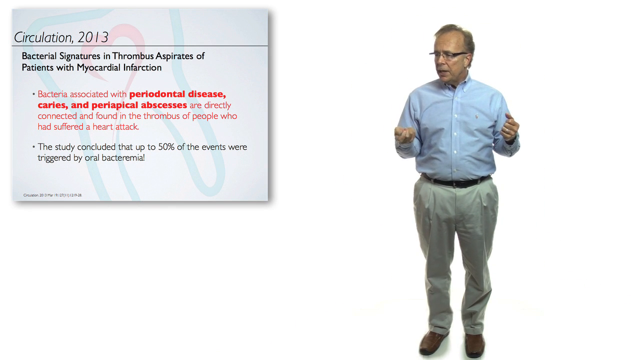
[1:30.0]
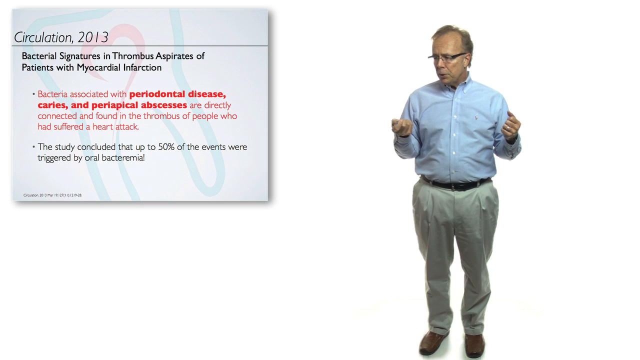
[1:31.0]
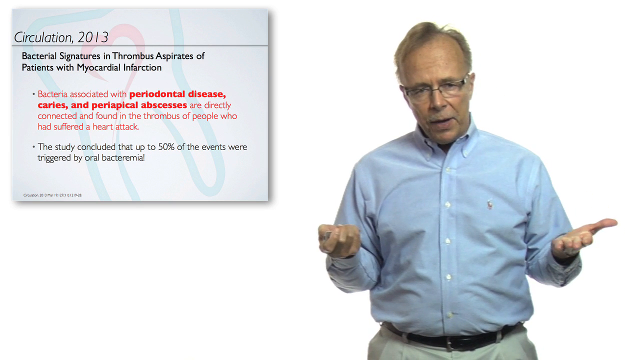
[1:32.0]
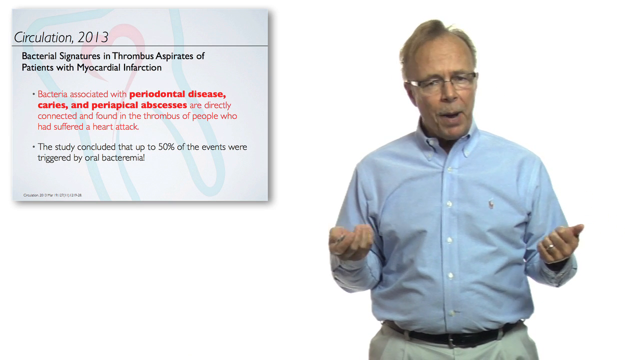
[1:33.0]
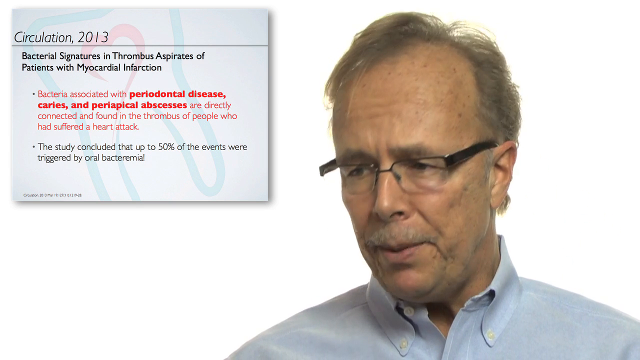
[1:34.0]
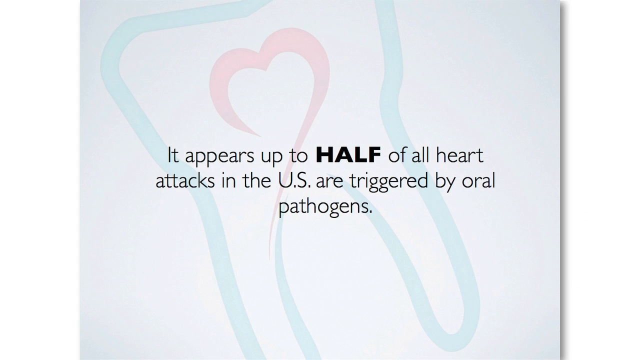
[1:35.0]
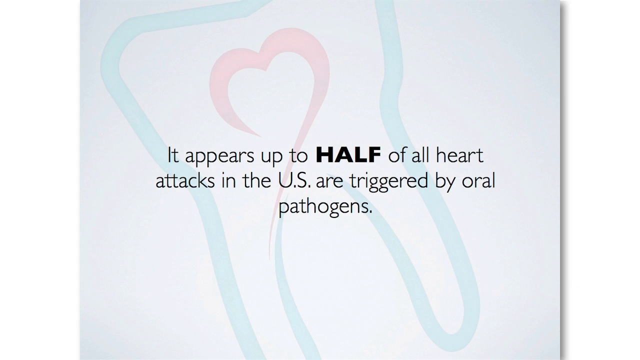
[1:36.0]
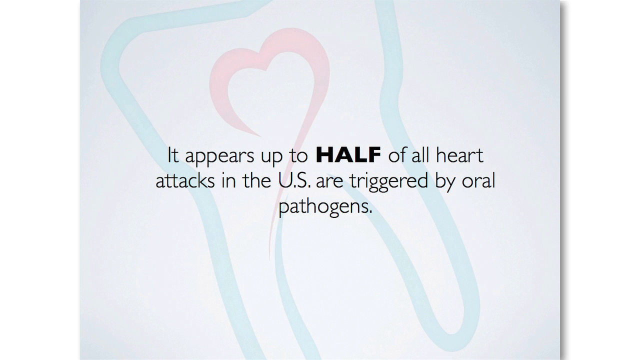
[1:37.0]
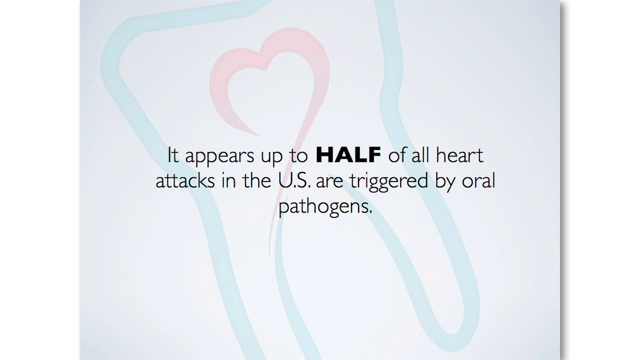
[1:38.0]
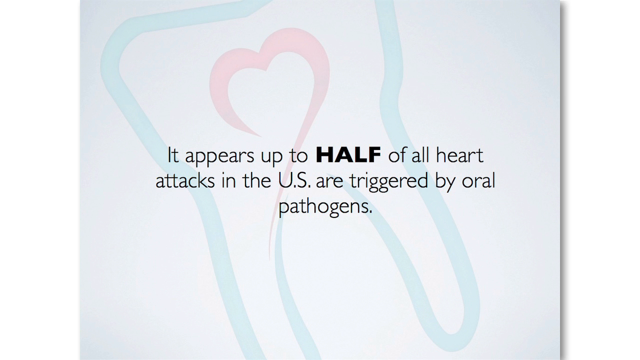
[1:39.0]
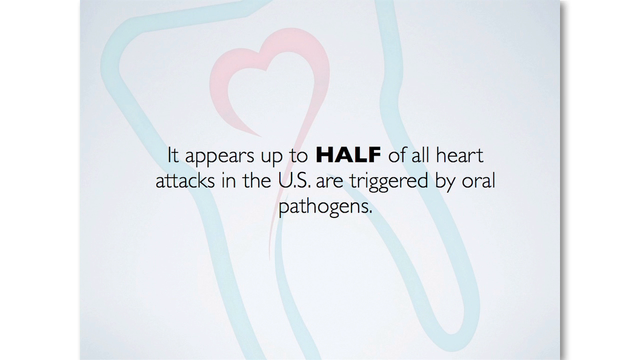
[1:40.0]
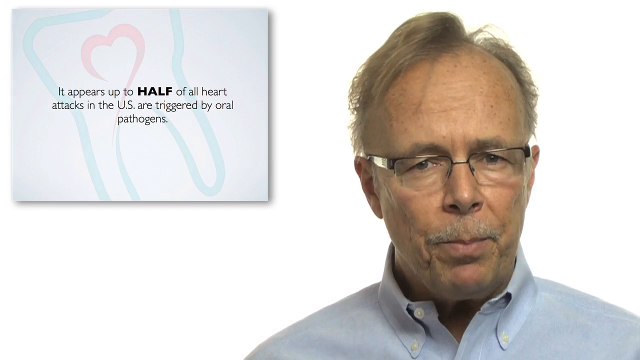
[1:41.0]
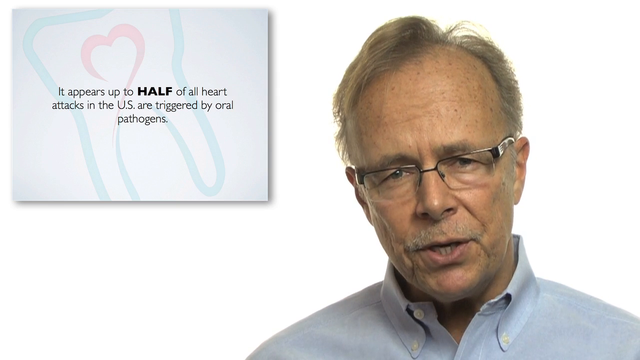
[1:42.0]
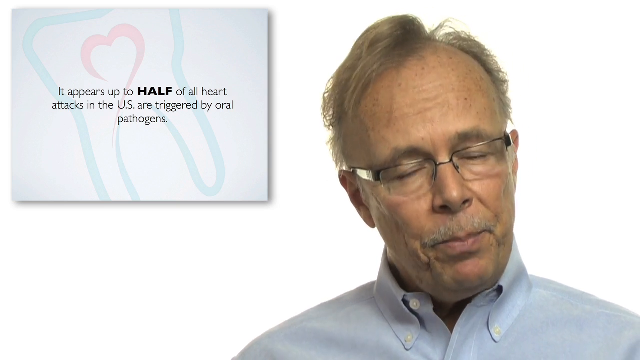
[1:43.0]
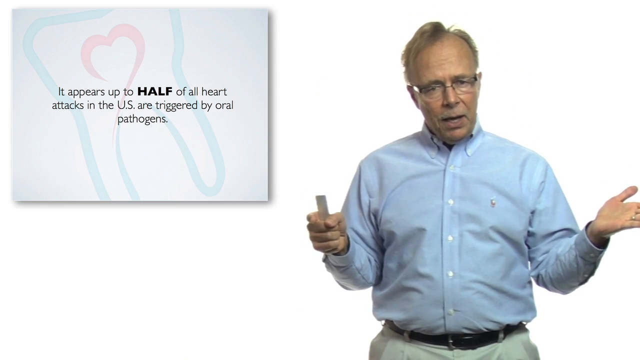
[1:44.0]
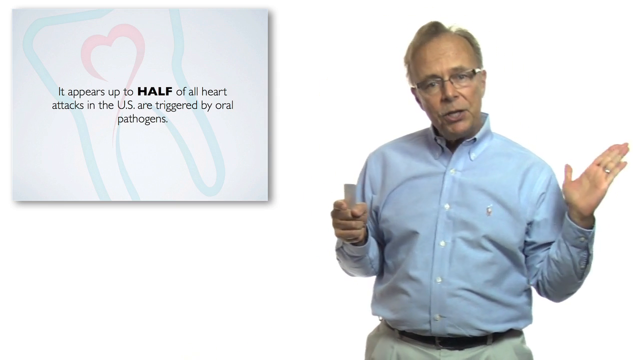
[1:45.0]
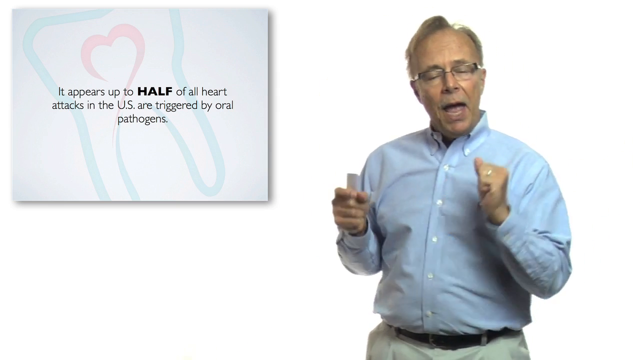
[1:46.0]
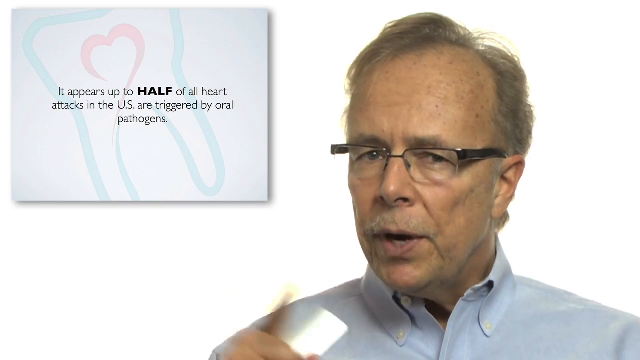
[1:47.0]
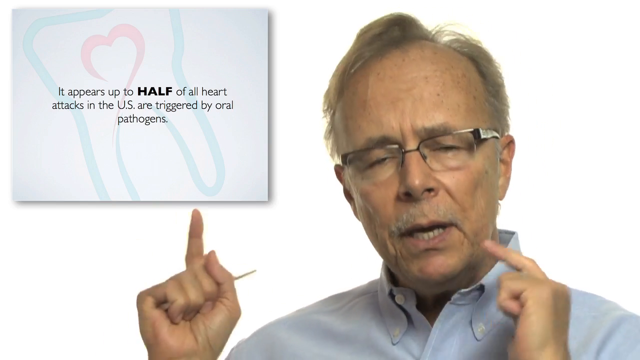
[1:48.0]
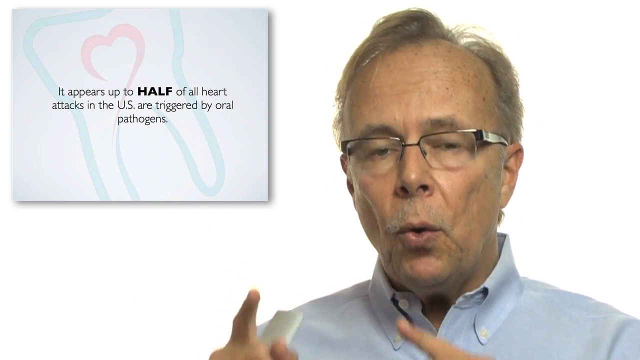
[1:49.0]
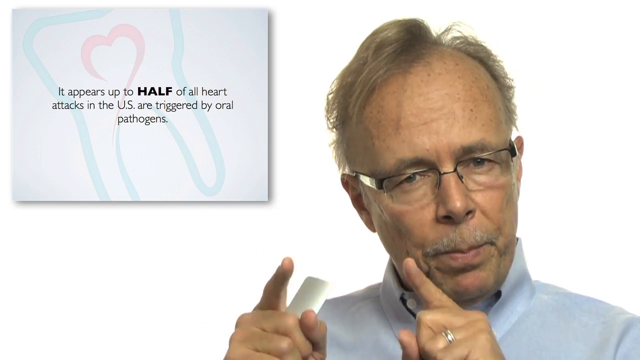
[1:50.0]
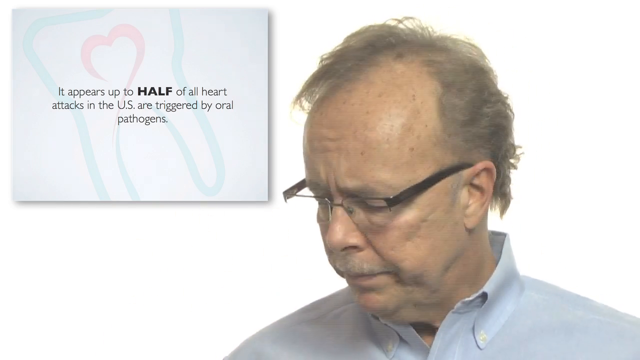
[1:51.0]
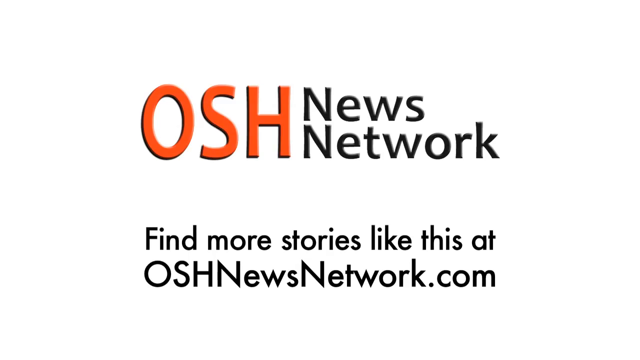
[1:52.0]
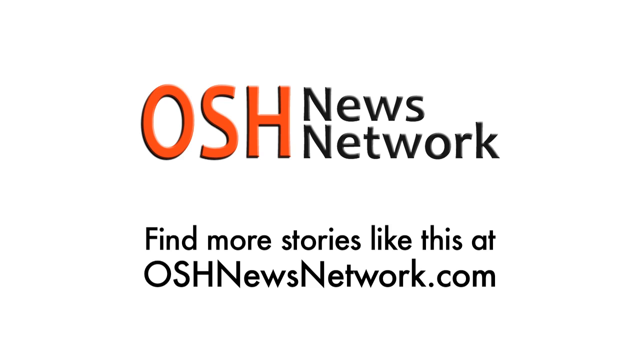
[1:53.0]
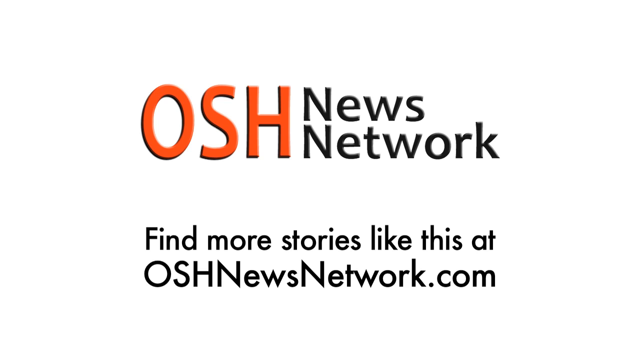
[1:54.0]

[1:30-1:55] The man seems to be talking a little faster and kind of moves his hands up and down really quickly, apparently for emphasis. The camera zooms into a slide that reads "it appears up to half of all heart attacks in the U.S. are triggered by oral pathogens," with "half" in a larger font, in all capital letters, and bold. The slide then returns to the top left corner, and the man is shown talking and gesturing with his hand, kind of moving it from one spot to another, apparently mimicking movement. He also shakes his head. At the end of the video, "OSH News Network" appears with "OSH" in orange, and at the bottom it says "find more stories like this at oshnewsnetwork.com."